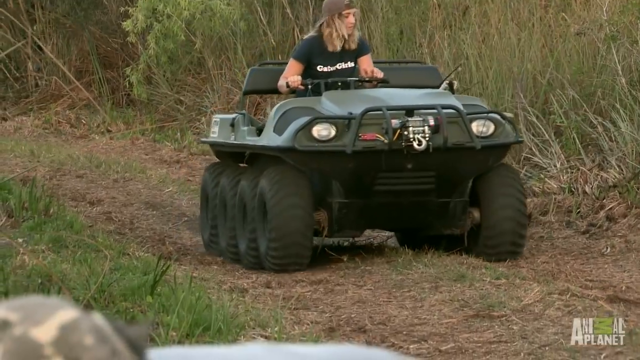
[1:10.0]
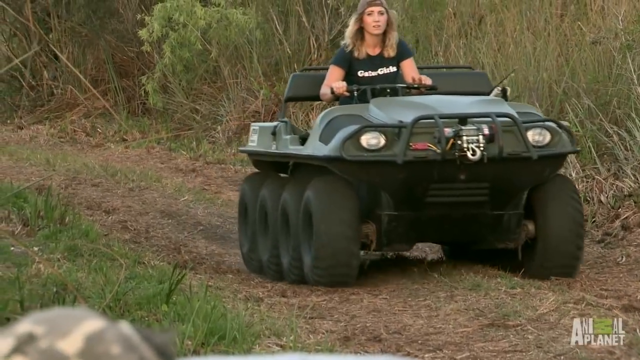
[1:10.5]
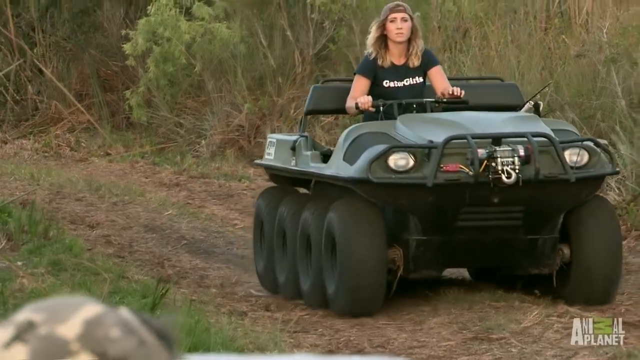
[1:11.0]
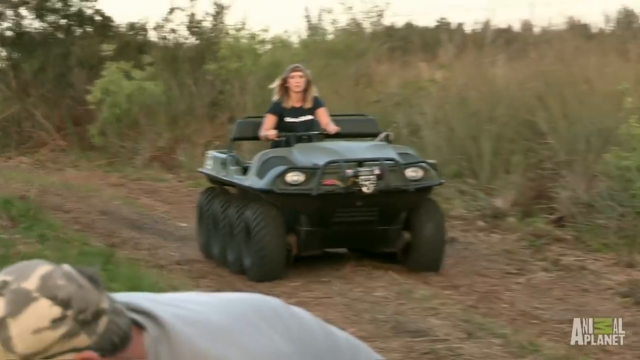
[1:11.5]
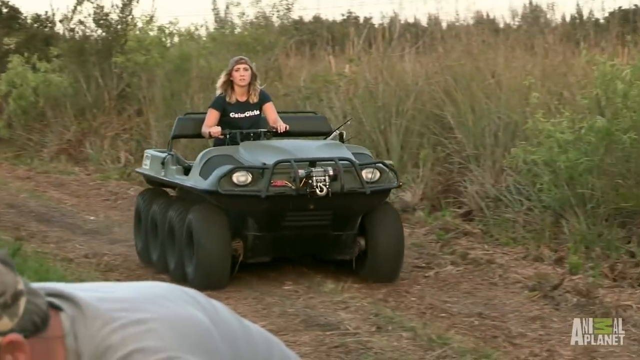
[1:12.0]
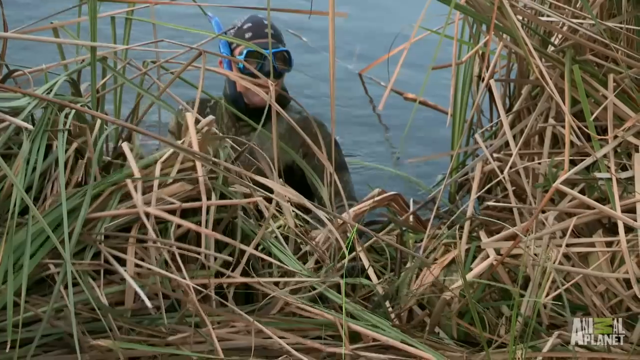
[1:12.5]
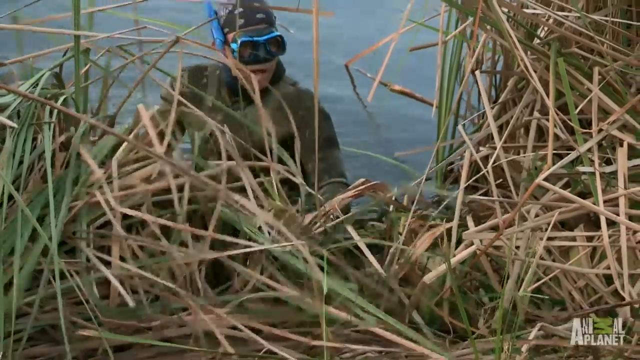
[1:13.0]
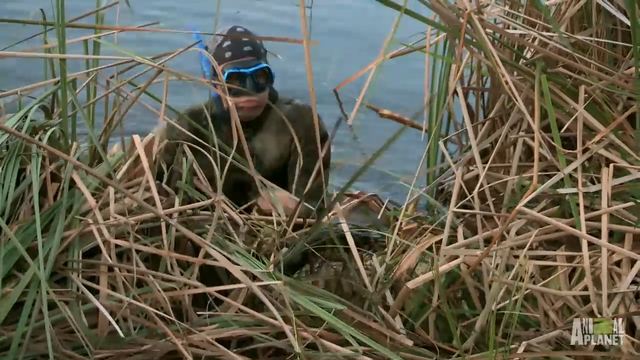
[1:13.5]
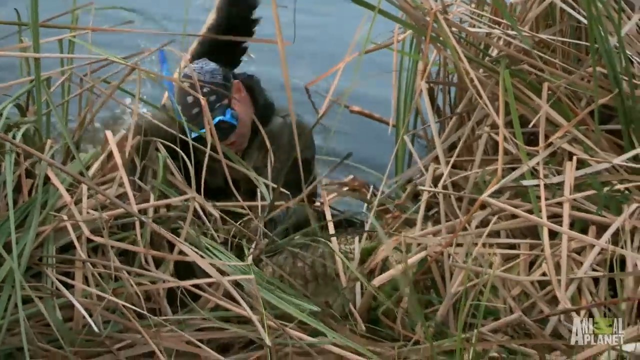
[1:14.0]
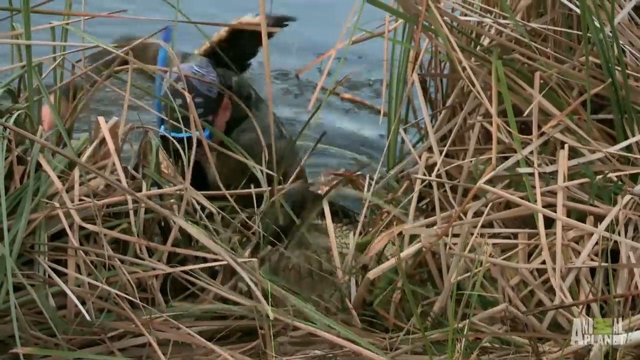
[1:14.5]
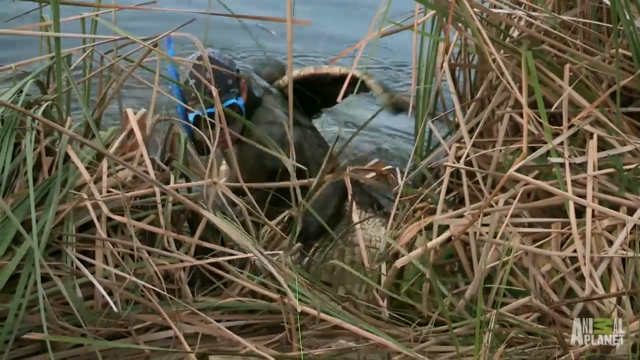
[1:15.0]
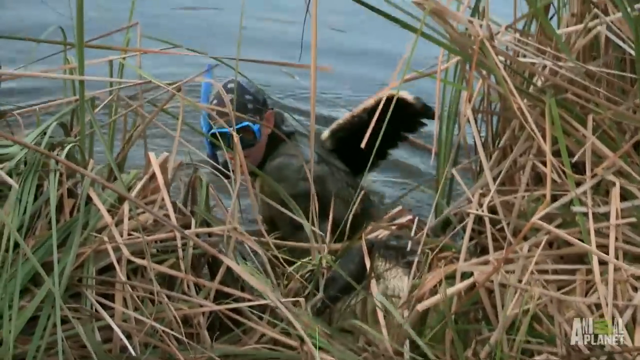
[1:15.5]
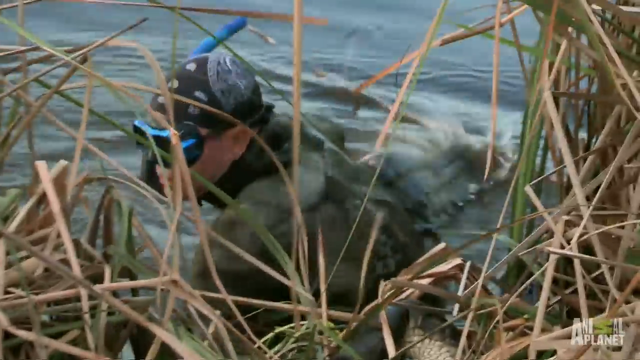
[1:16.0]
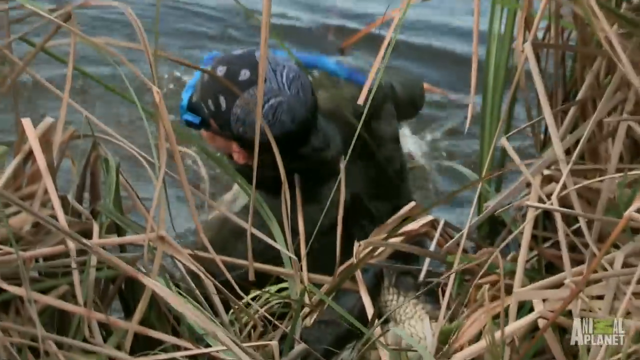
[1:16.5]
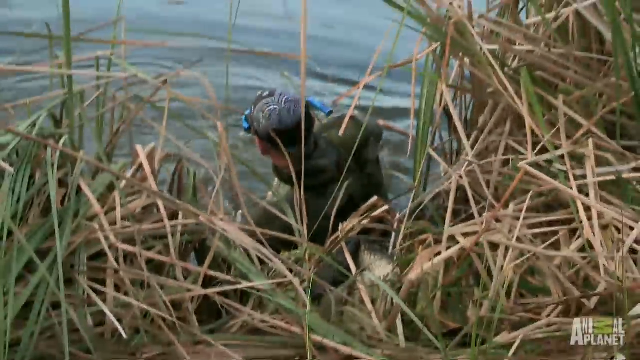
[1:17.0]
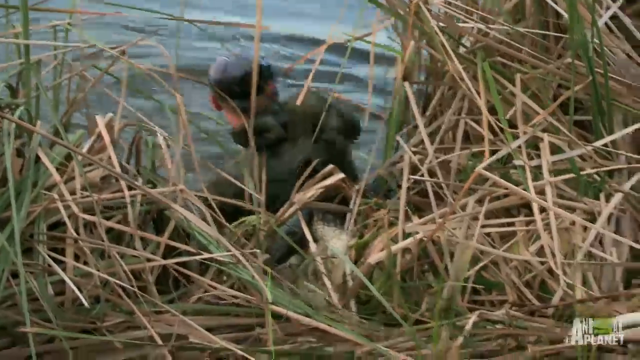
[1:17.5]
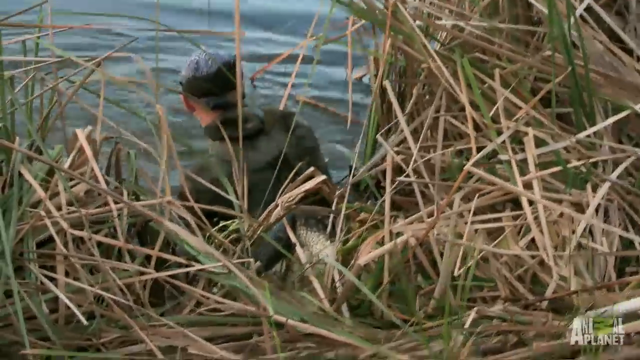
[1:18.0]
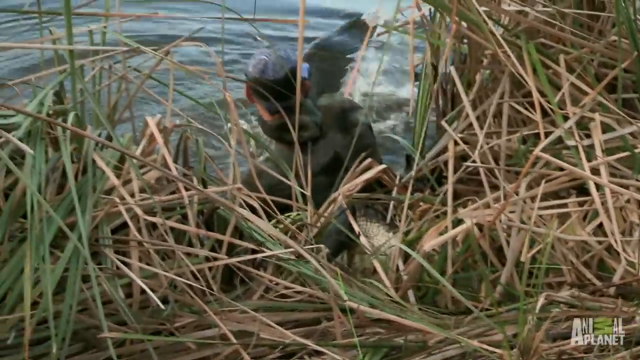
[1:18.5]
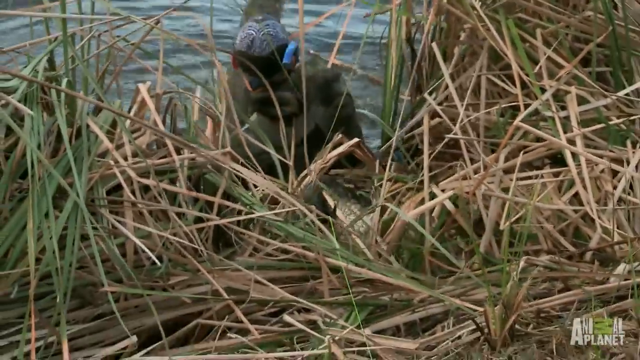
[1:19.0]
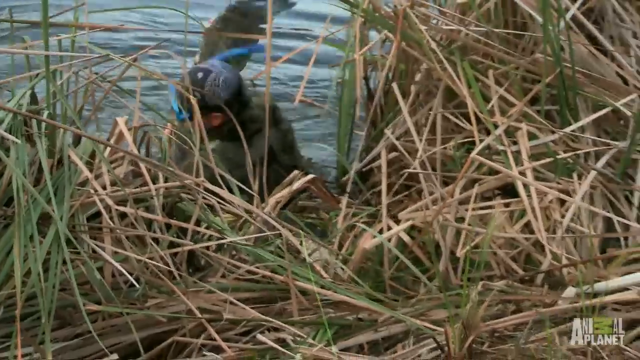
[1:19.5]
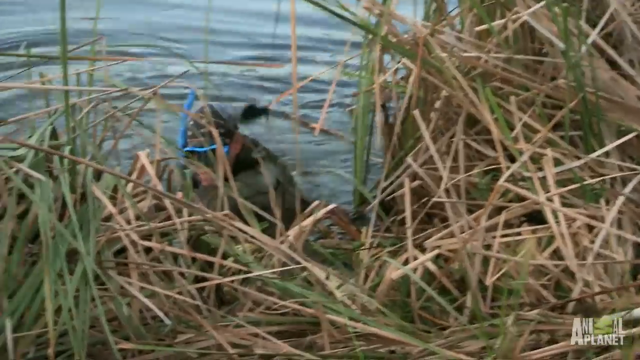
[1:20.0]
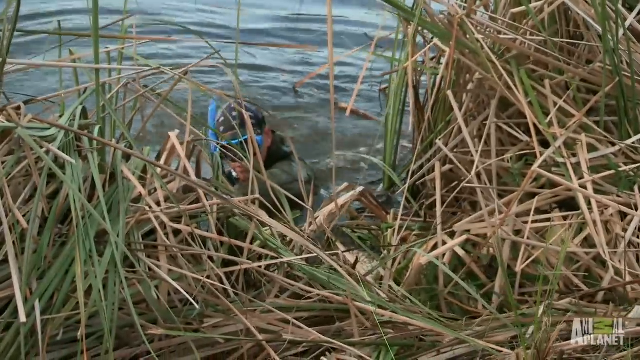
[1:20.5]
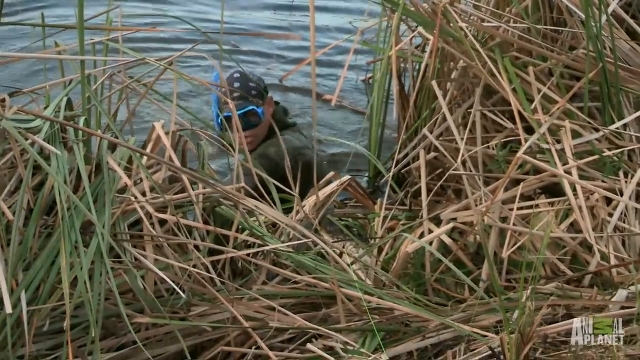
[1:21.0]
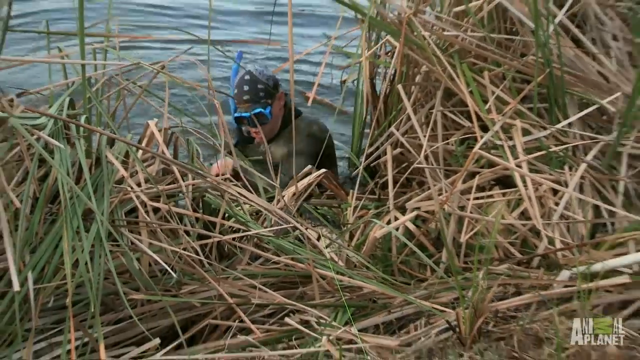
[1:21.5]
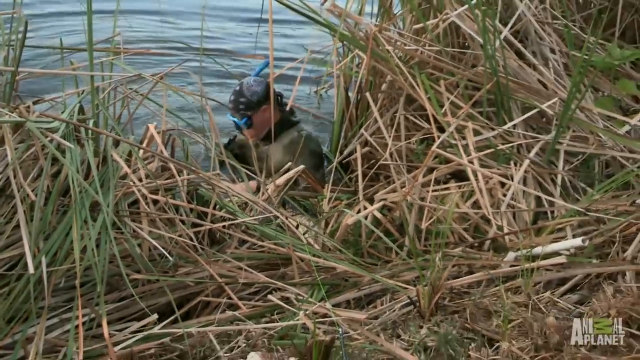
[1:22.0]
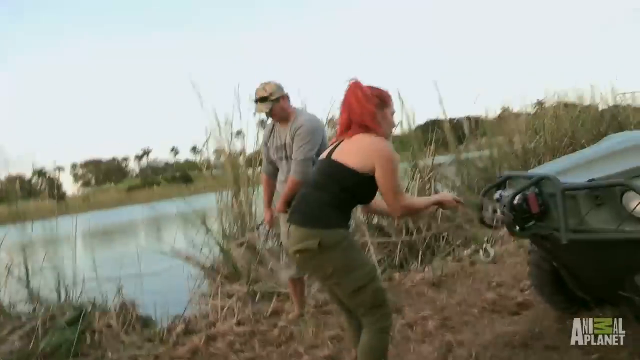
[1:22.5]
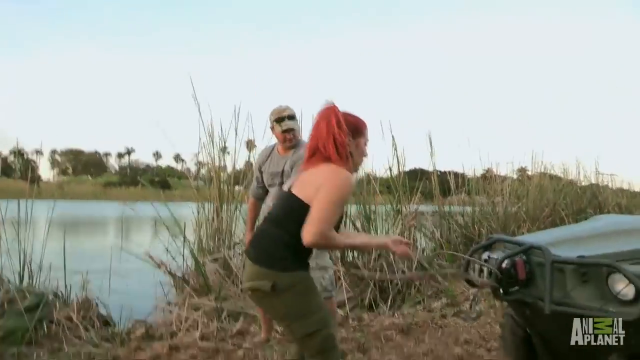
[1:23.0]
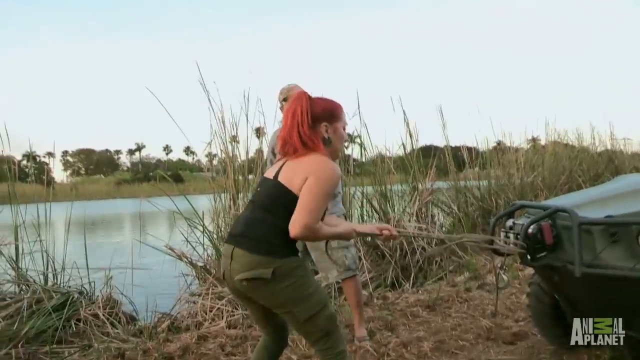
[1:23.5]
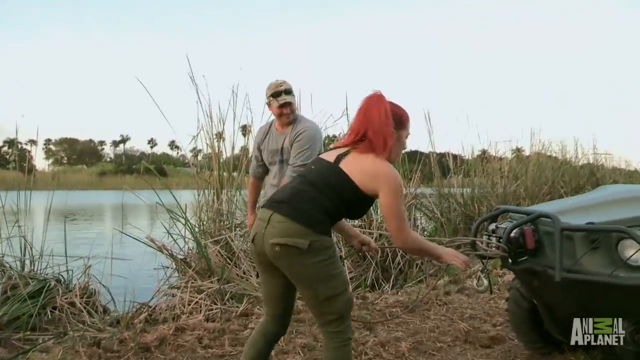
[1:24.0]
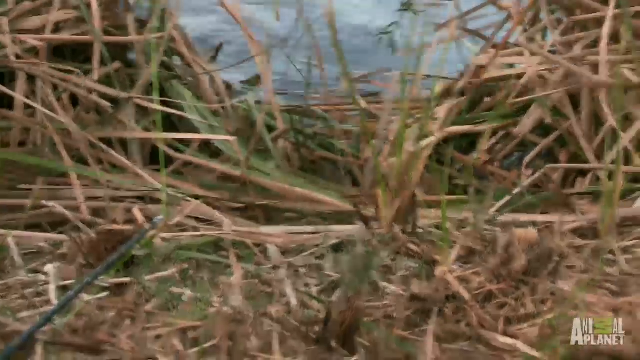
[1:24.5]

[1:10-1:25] The woman's vehicle is an eight-wheeled ATV, dark green or black in color. She has short, dirty blonde hair reaching a little past her shoulders. The camera switches to the man wrestling the alligator in the water next to the reeds as it whips its large tail back; he tries to secure the tail, reaching back with his other arm to grab at it. The scene switches to the woman with bright red hair, a black tank top and olive-colored pants pulling at the rope; she appears to be tying the rope onto the eight-wheeled ATV while the man in the gray t-shirt stands off to the side.